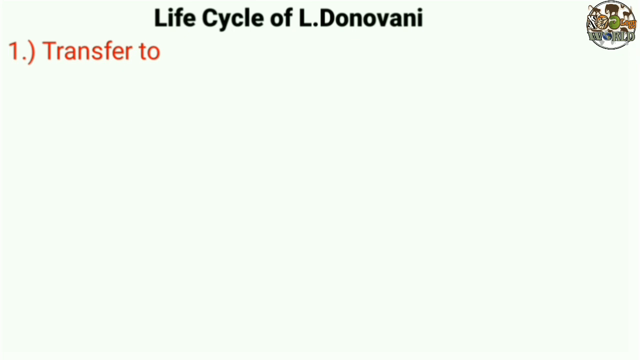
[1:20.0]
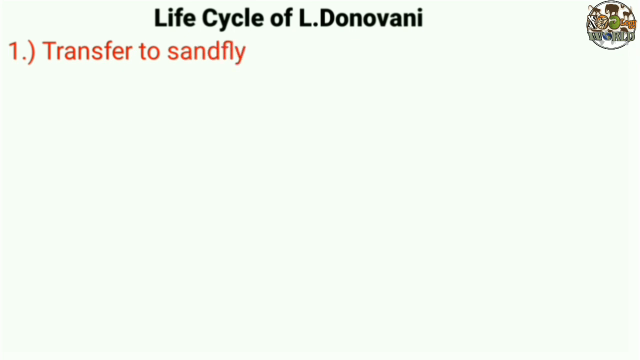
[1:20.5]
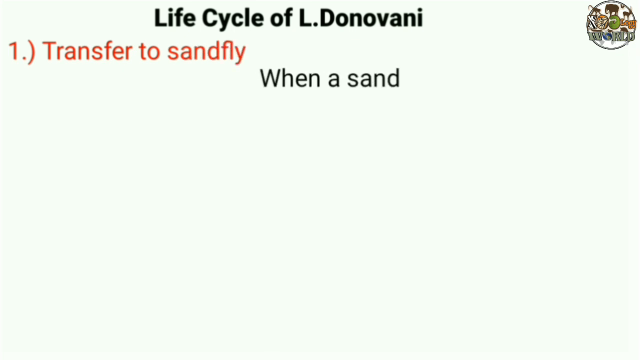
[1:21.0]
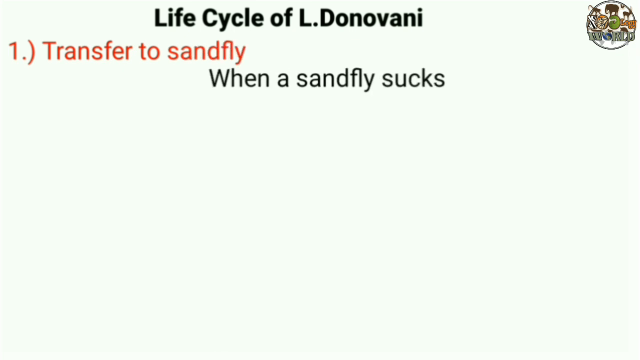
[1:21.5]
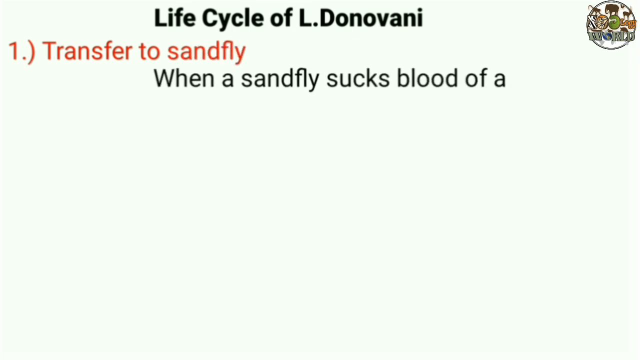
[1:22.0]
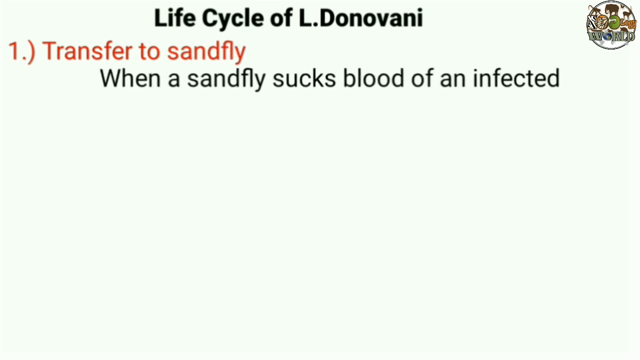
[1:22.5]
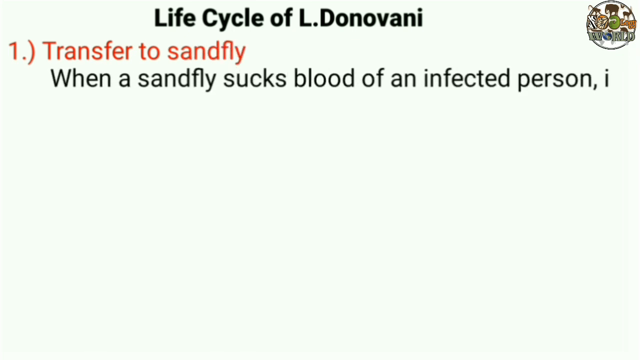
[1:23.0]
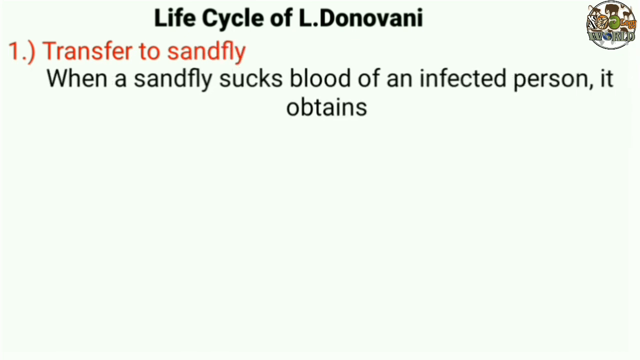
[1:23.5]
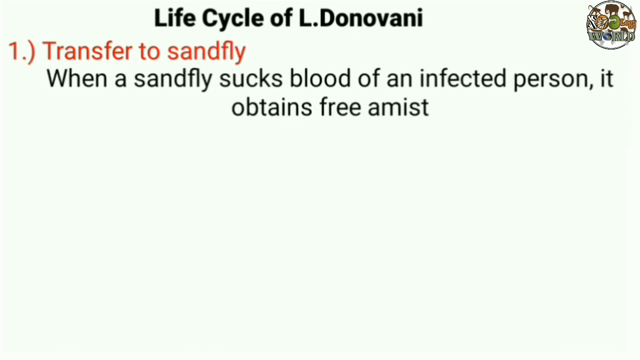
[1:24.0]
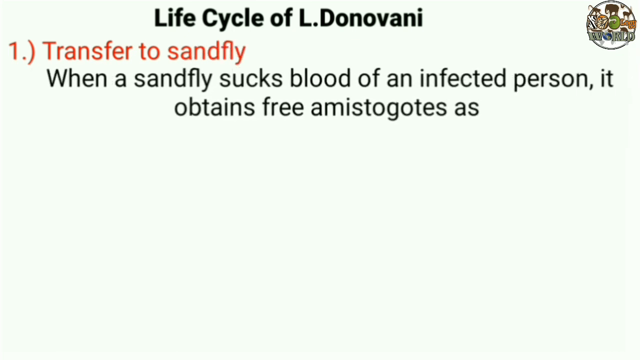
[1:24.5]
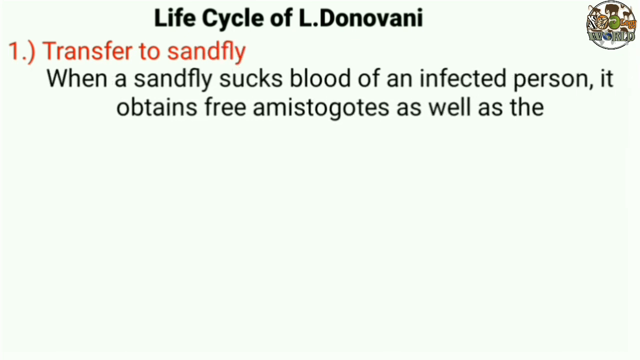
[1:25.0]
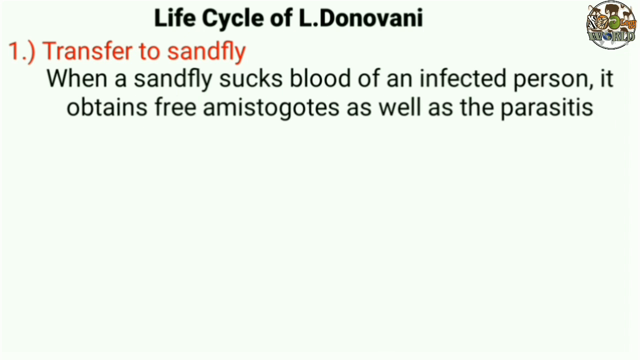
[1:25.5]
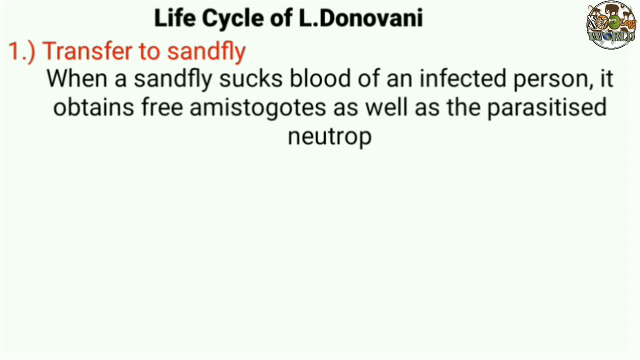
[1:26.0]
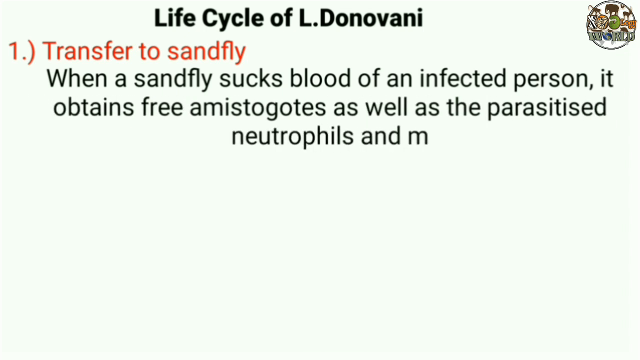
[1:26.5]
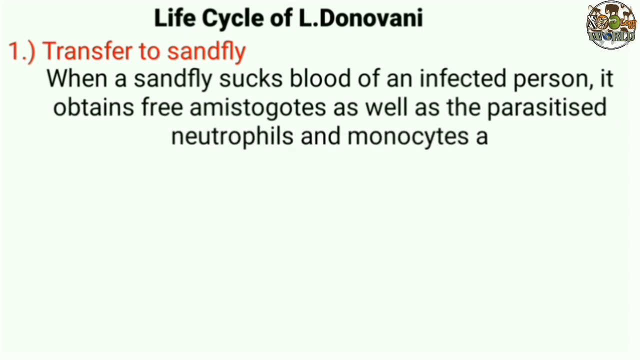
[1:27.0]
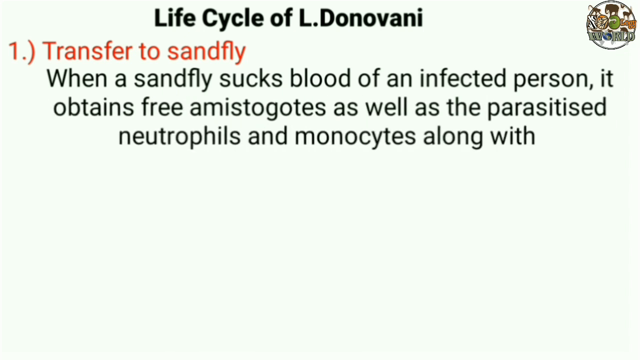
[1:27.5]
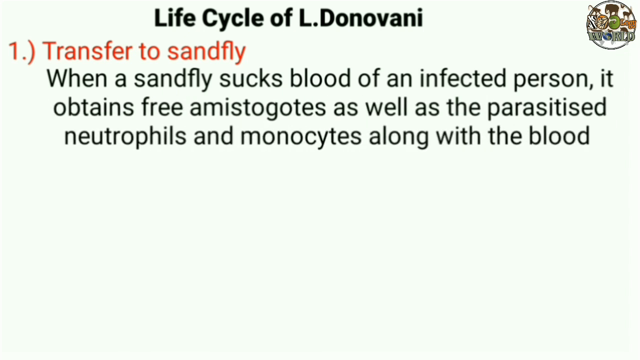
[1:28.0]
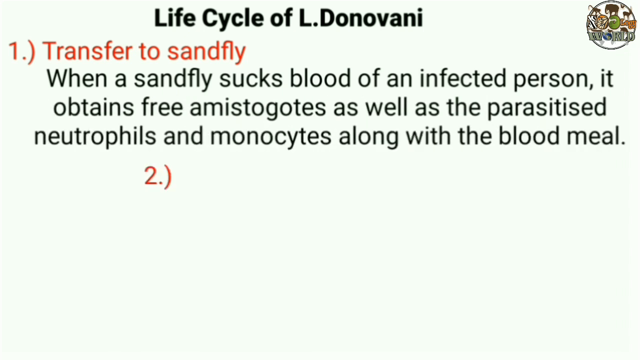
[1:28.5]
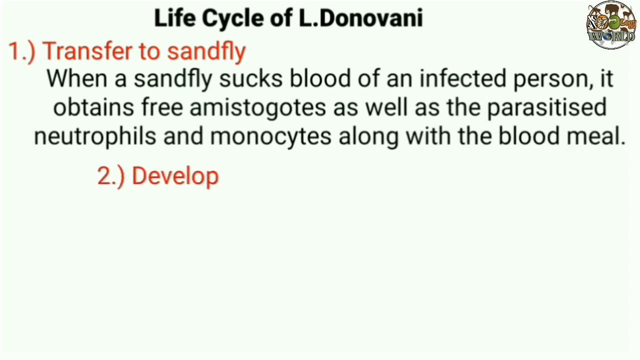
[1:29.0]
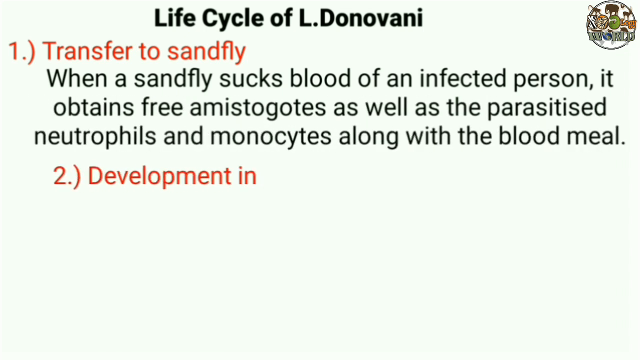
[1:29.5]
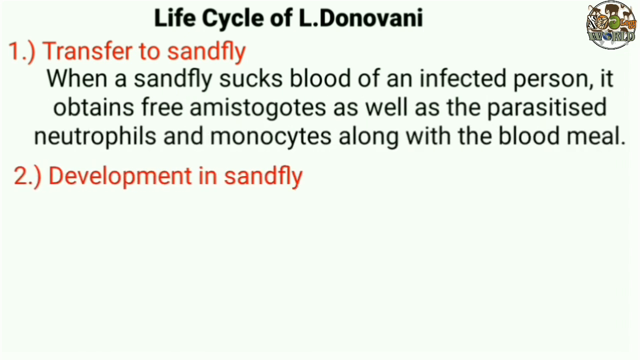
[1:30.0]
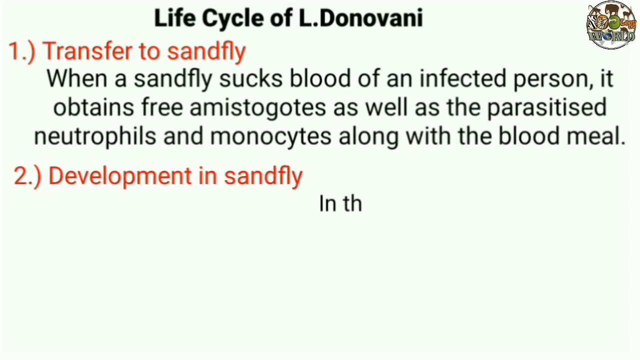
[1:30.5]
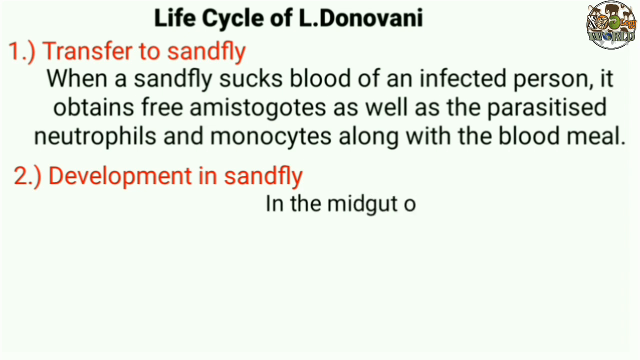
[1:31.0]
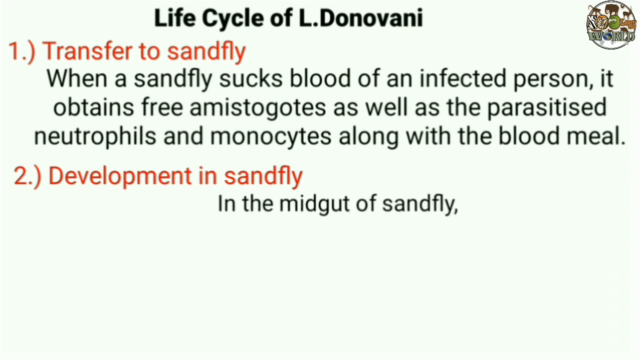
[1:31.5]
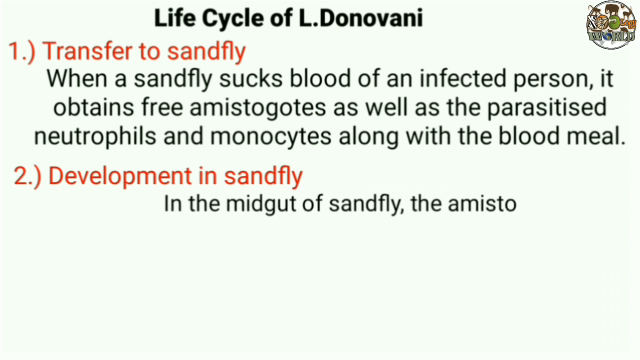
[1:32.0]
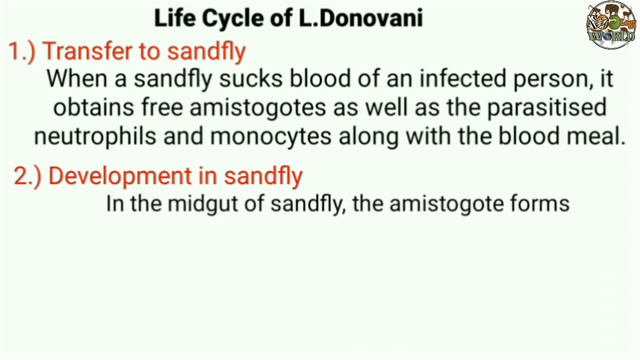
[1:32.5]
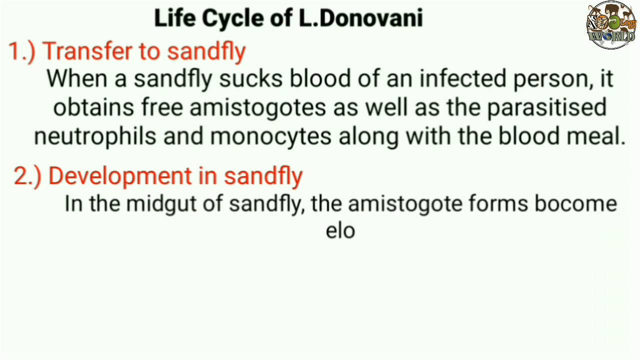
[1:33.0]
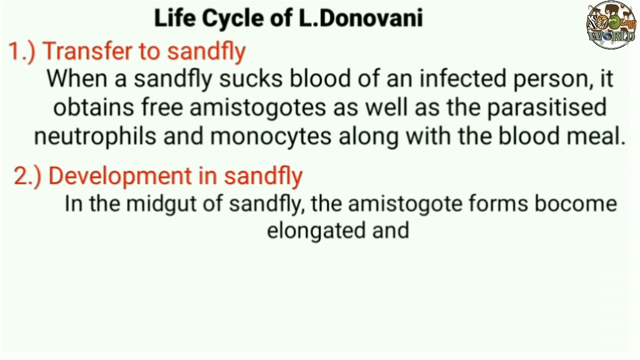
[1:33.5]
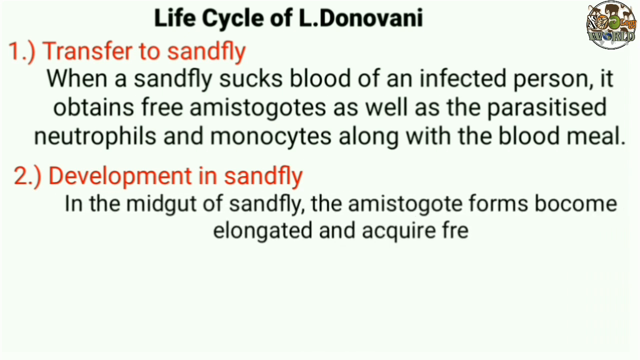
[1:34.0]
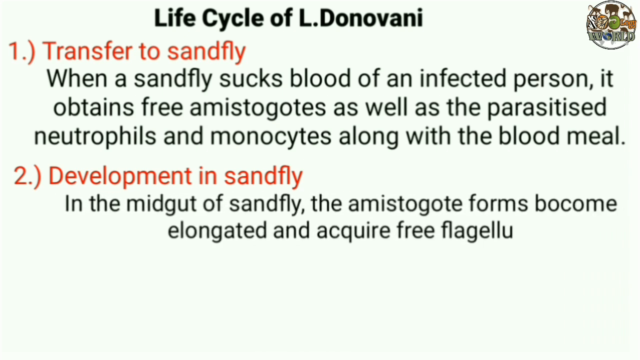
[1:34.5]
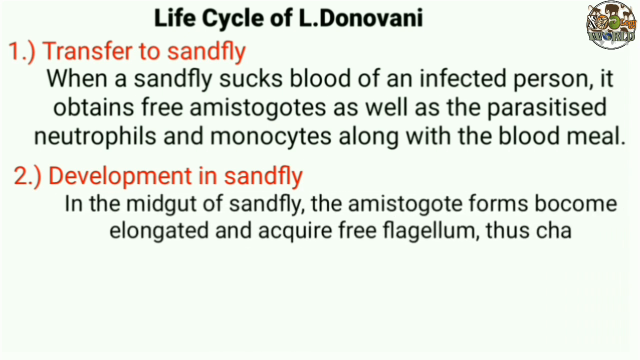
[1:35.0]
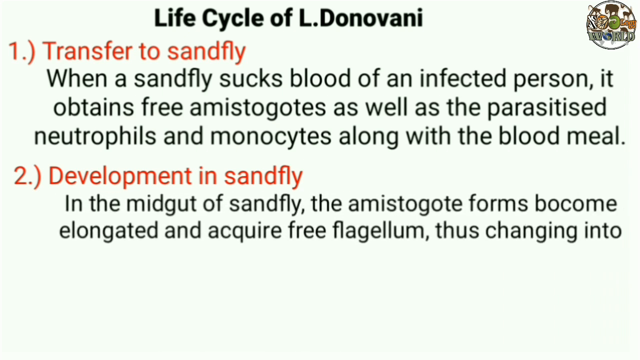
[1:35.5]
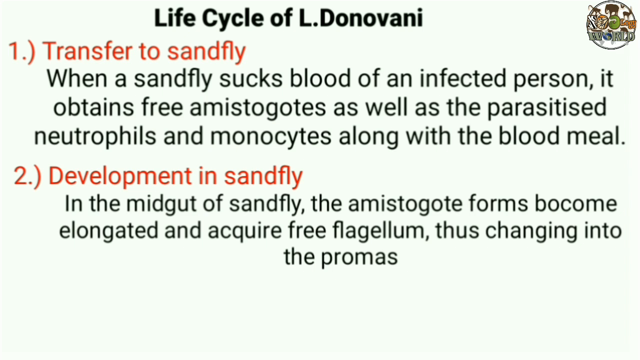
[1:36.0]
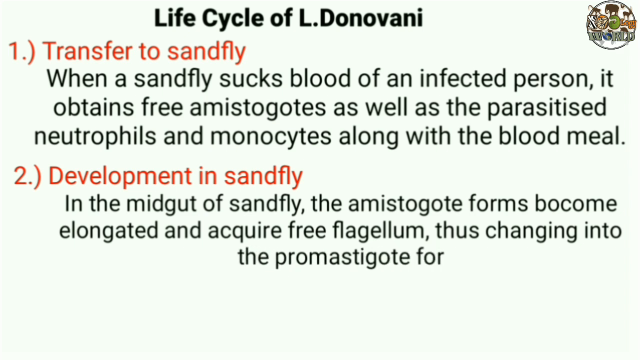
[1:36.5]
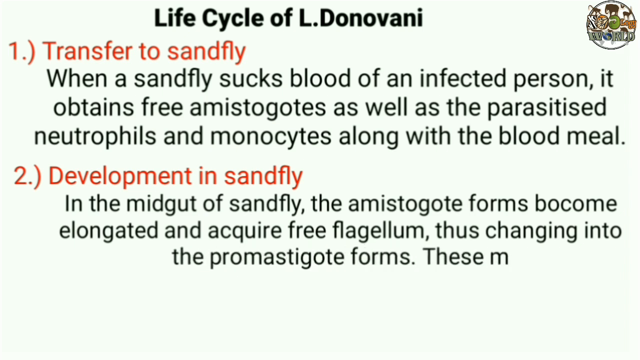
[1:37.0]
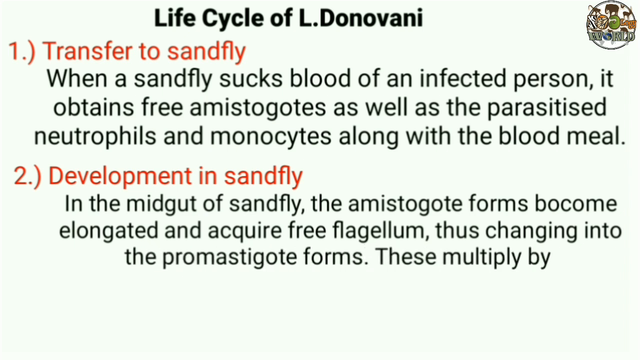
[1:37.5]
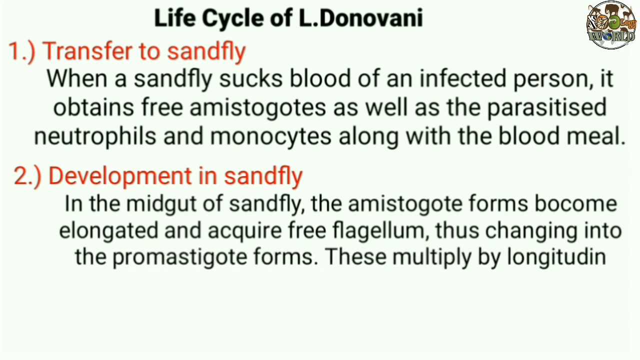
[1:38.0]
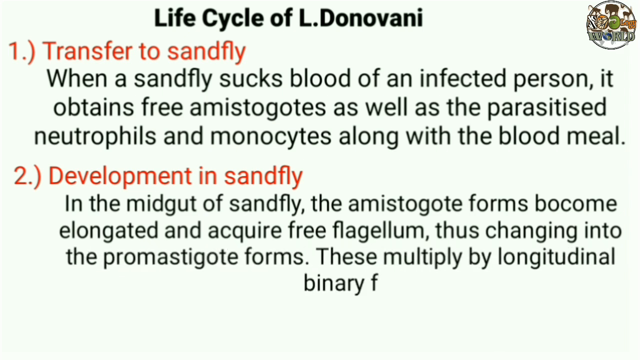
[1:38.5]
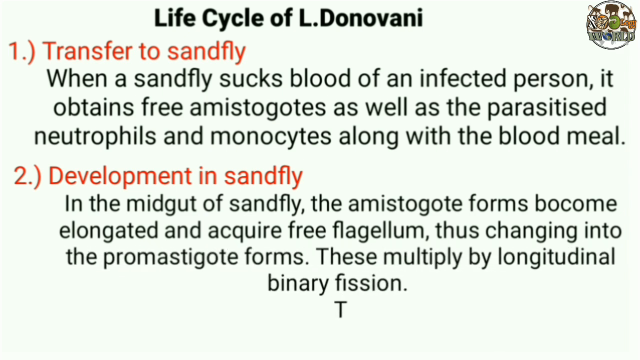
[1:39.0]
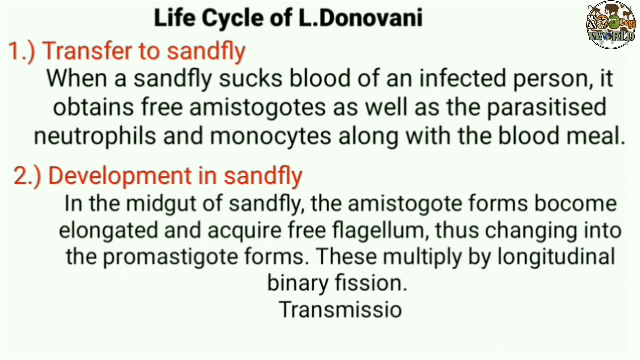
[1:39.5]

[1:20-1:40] On a white background with the logo in the top right, the heading "the life cycle of L. donovani" is at the top in green. Below it, sentences form from left to right. The first title, in orange, is "transfer to Sandfly." Below it the text reads "when a sandfly sucks blood of an infected person, it obtains free amistogotes, as well as the parasitised neutrophils and monocytes along with the blood meal." Below that is a second orange title, "development in Sandfly," followed by "in the midgut of the sandfly, amistogote forms become elongated and acquire free flagellum, thus changing into the promastigote forms. These multiply by longitudinal binary fission." Below that the word "transmission" appears. All the sentences below the titles are green.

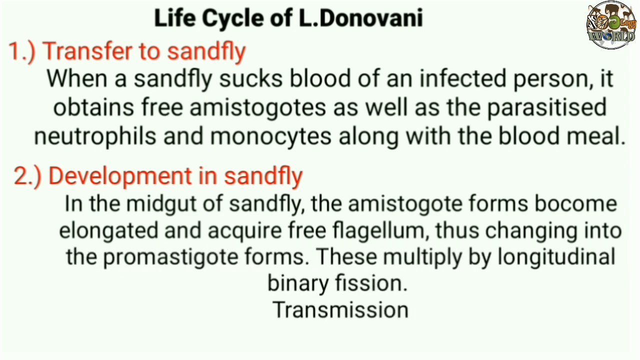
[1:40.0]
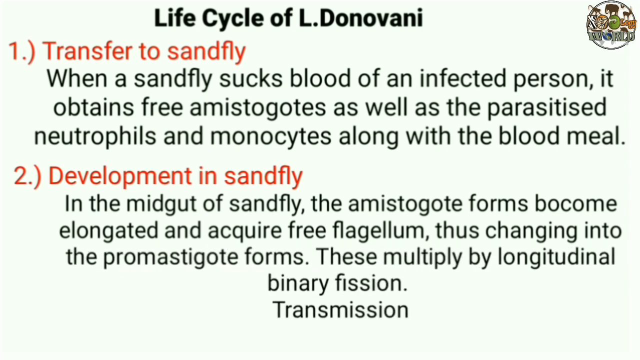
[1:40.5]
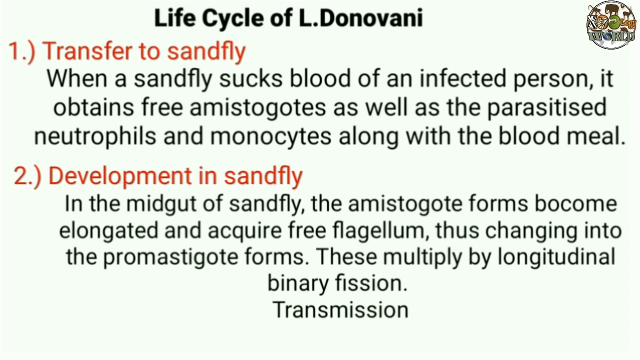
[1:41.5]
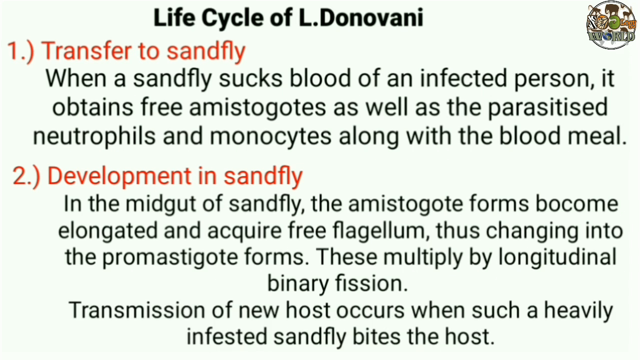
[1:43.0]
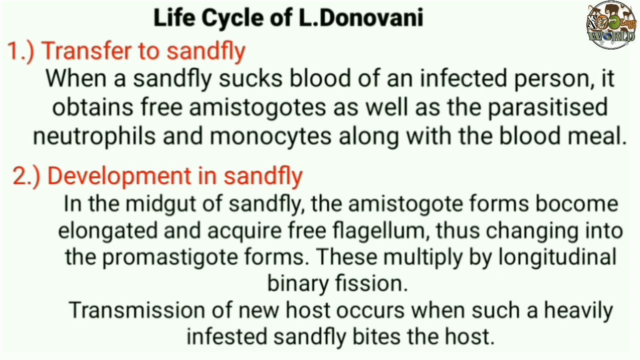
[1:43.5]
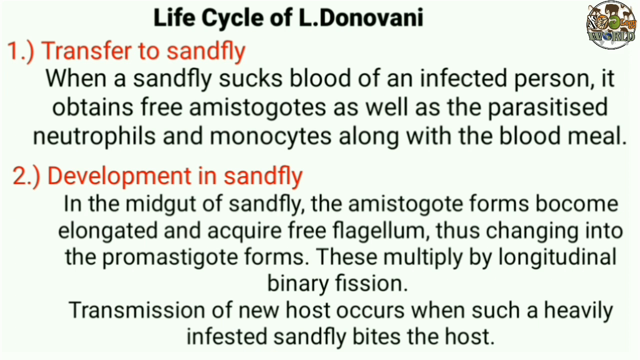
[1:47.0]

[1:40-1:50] On a white background, the Zoology World logo is visible in the top right, with animals in the world in the background. The title at the top, in green, is "Life Cycle of L Donovani." The first subject below the title explains how, when a sandfly sucks blood of an infected person, it becomes transferred to the sandfly. Below that, text explains the development in the sandfly. At the bottom of the screen a sentence appears: "Transmission of new host acquires when such a heavily infested sandfly bites the host."